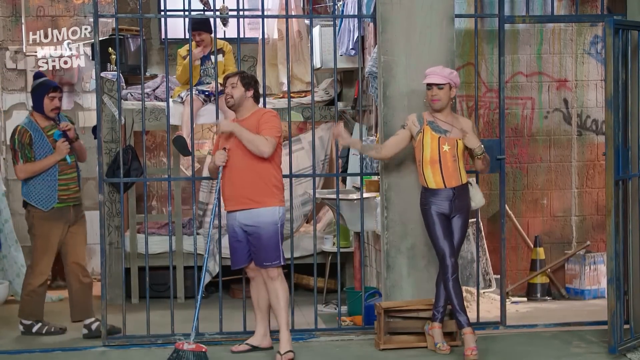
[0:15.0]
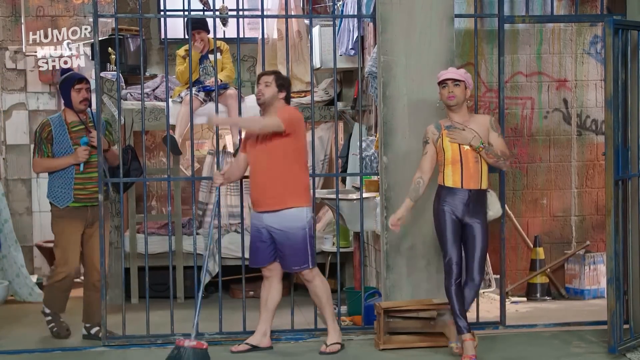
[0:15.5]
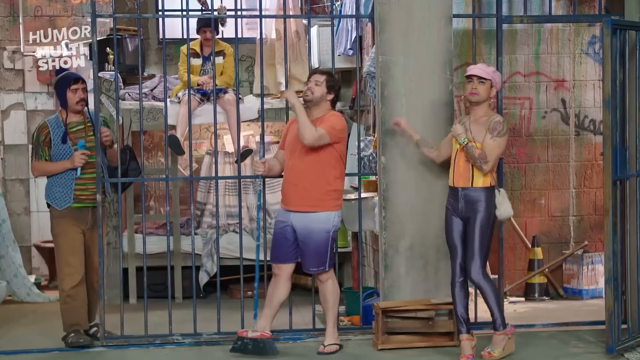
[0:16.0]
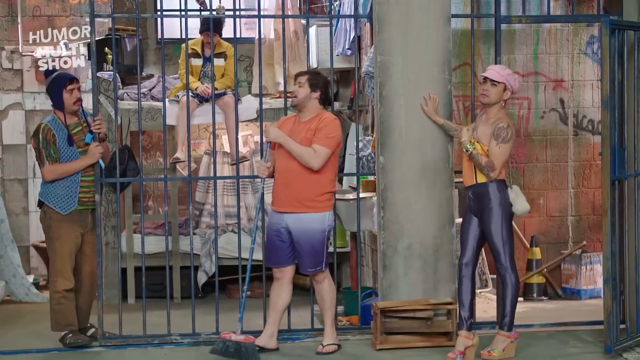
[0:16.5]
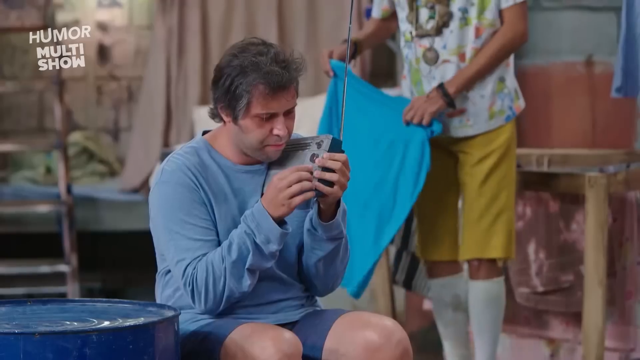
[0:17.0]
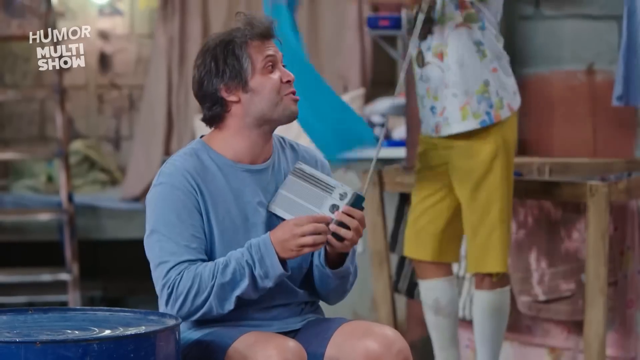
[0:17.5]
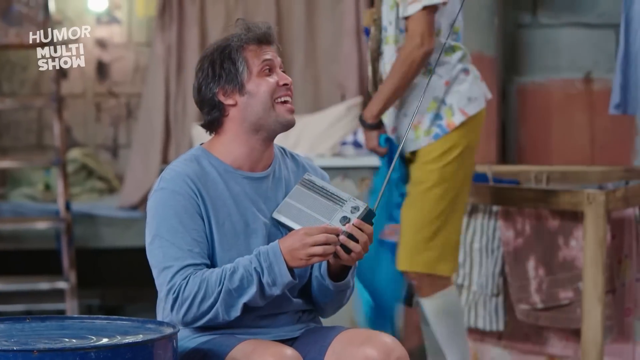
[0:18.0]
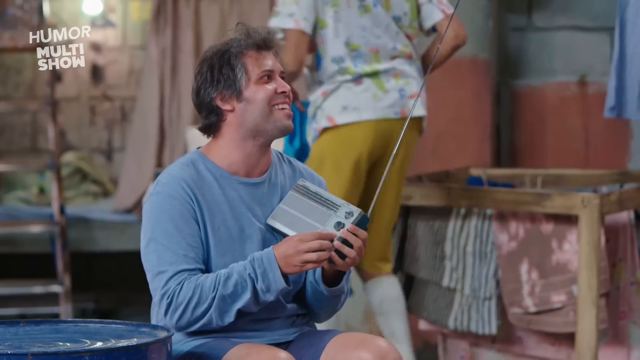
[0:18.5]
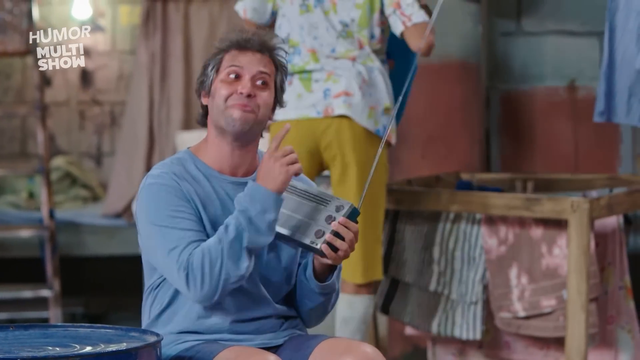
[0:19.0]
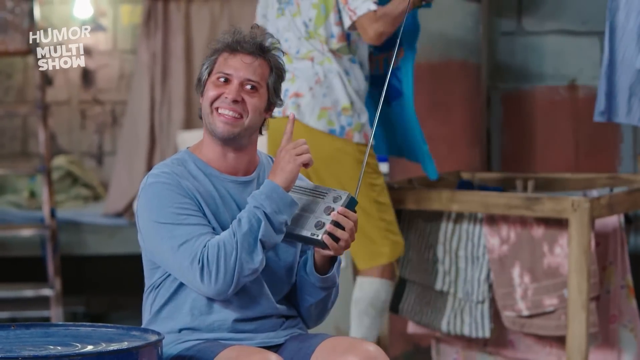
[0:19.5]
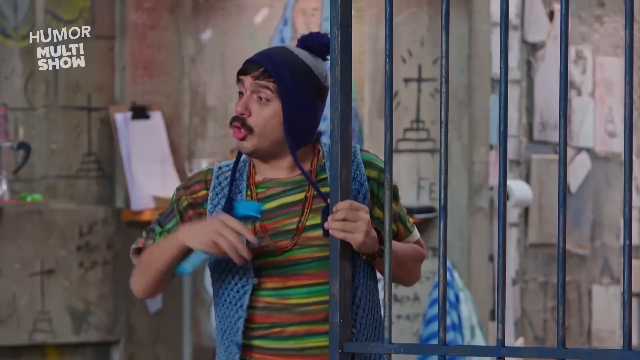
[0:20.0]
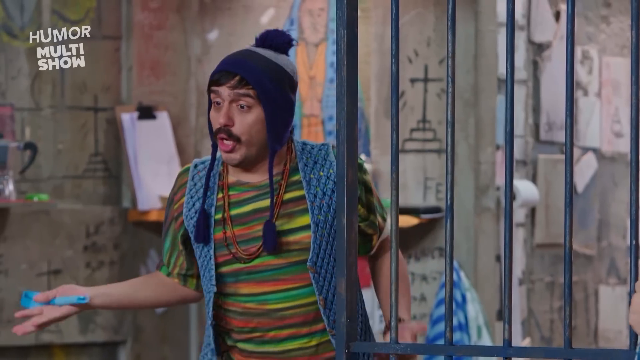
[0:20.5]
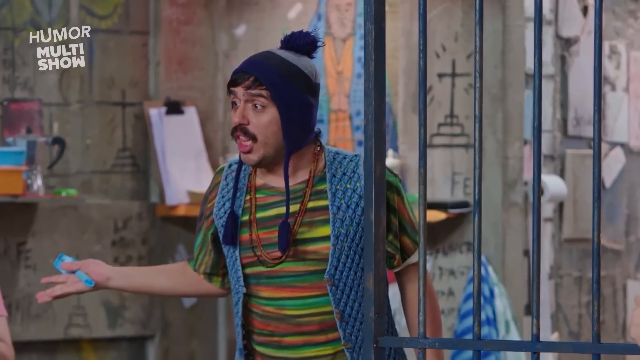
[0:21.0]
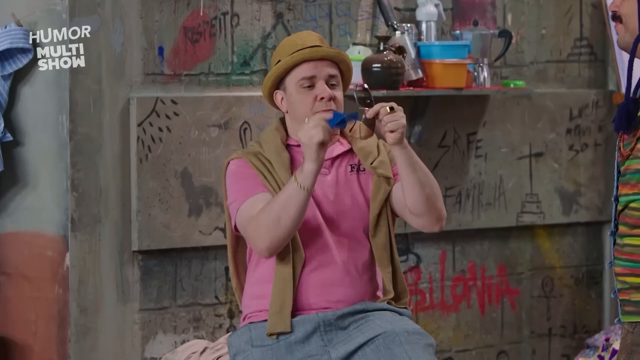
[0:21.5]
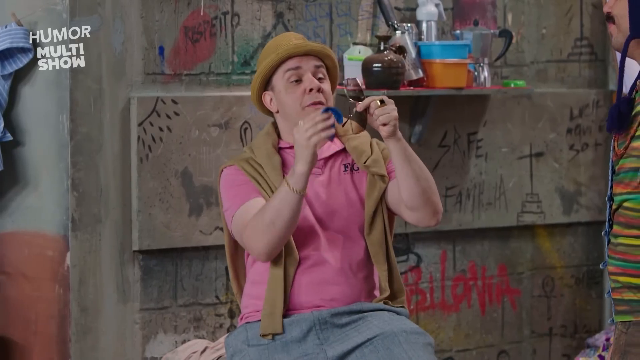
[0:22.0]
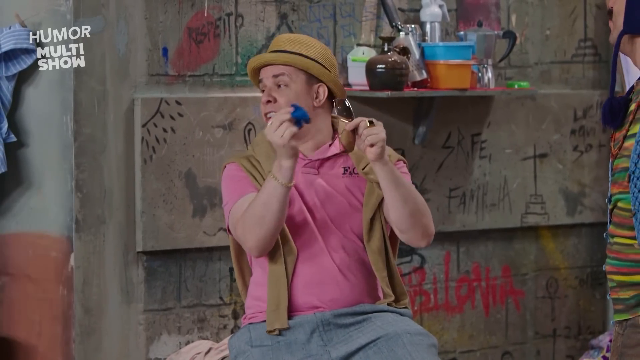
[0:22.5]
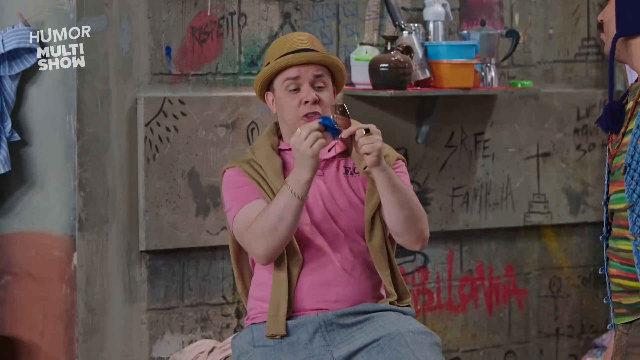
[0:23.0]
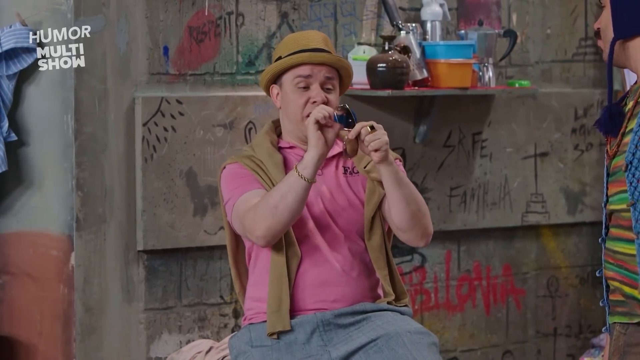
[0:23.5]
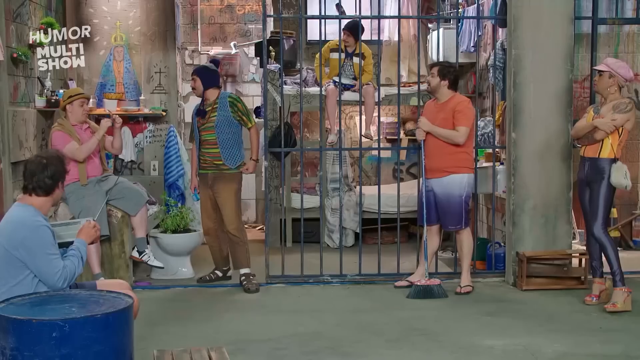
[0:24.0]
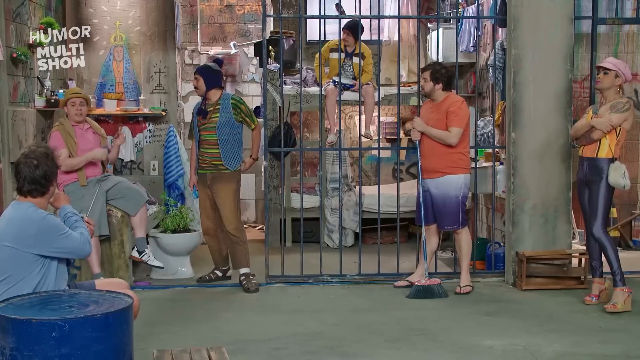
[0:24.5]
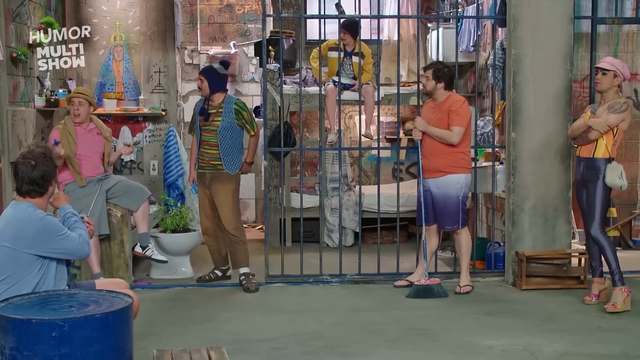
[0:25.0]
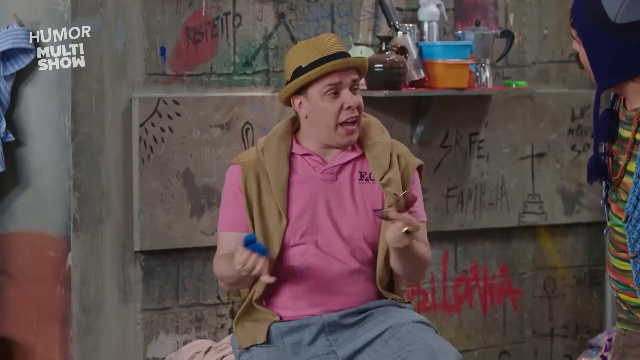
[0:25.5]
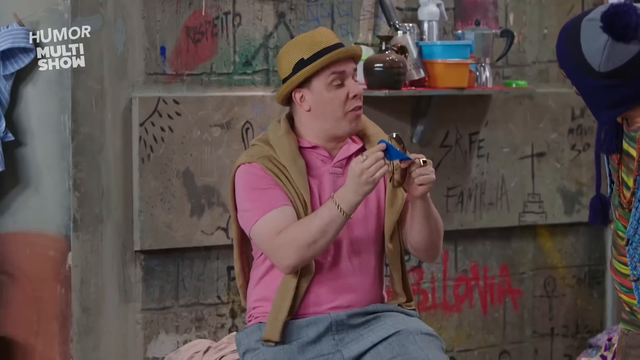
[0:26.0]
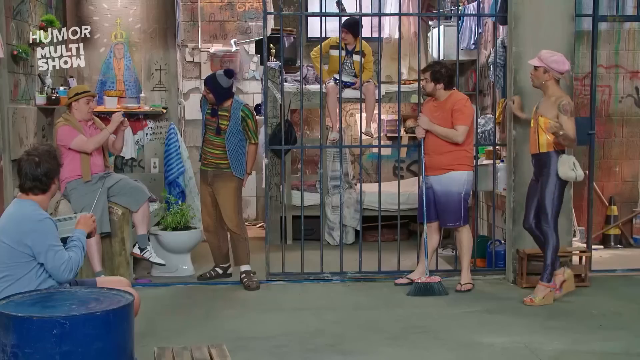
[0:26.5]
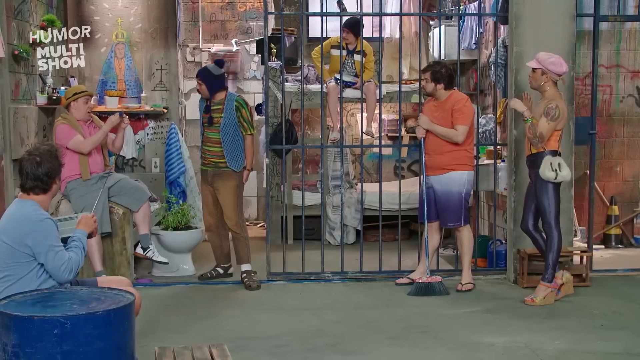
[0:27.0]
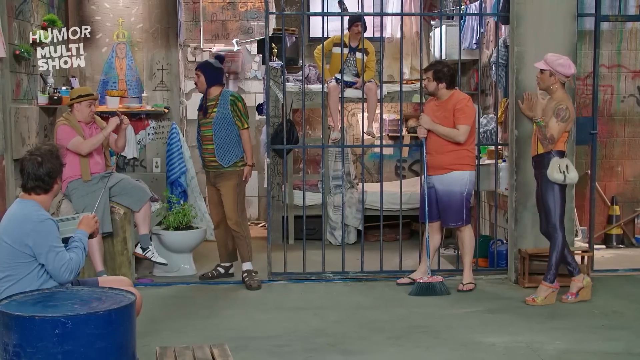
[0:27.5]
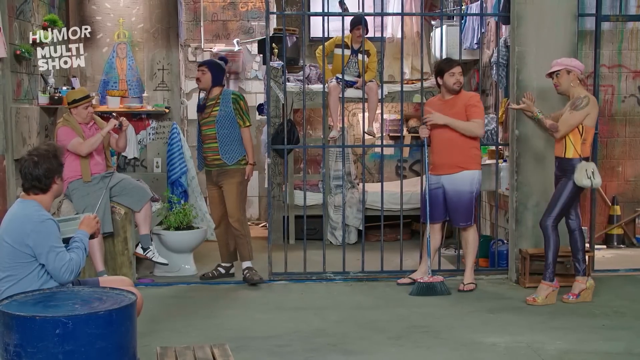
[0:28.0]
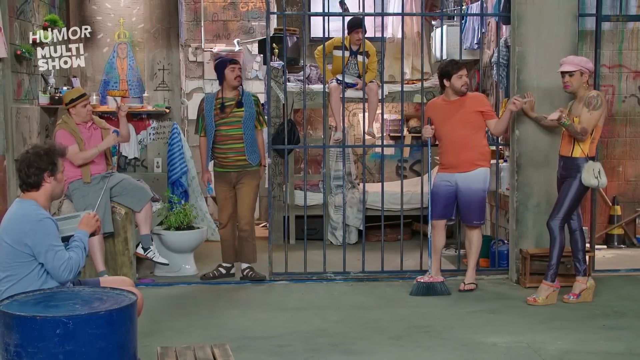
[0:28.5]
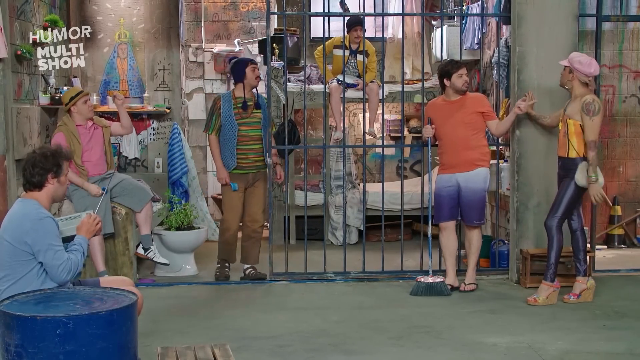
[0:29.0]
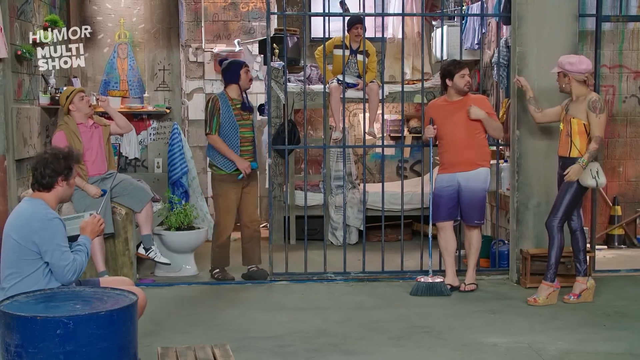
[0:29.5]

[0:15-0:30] The scene continues in the small prison cell area with about five people. A man in a pink shirt, a straw hat and sneakers is cleaning something. A man in a blue long-sleeve shirt, who looks to be in his 40s and has gray hair, is sitting down as they all have a discussion. An overweight man in an orange shirt leans against the bars of the cell; he has a broom or something in his hand and wears navy and white surf shorts. Off to the right is a transvestite prostitute in lycra spandex pants, a tube top, a pink hat and a white suit. Another man wears a hat with a pom-pom on top and two braided strings hanging down on each side from his ears; he has tan pants on and holds something that looks like a blue scrub brush. They are all chatting among themselves and arguing about something.